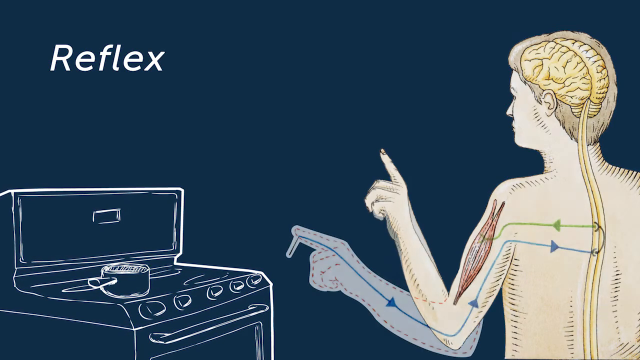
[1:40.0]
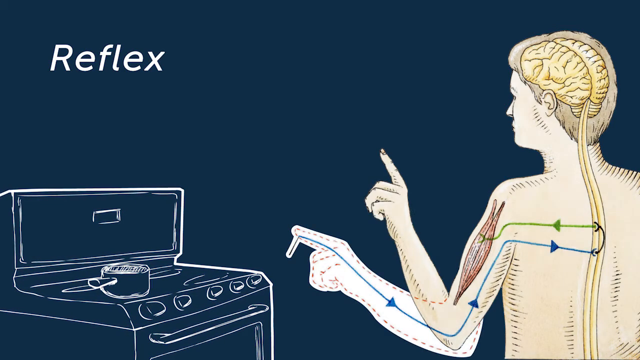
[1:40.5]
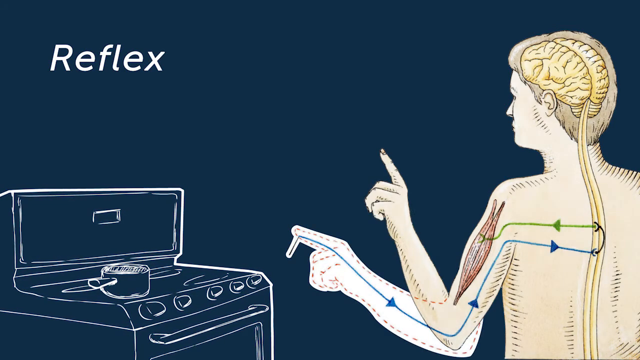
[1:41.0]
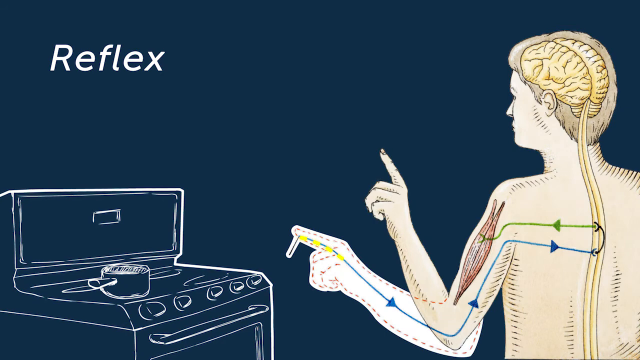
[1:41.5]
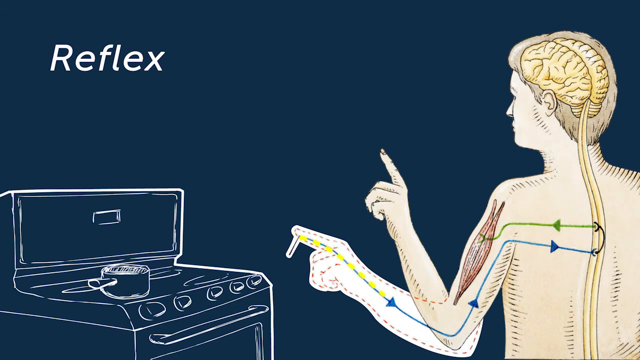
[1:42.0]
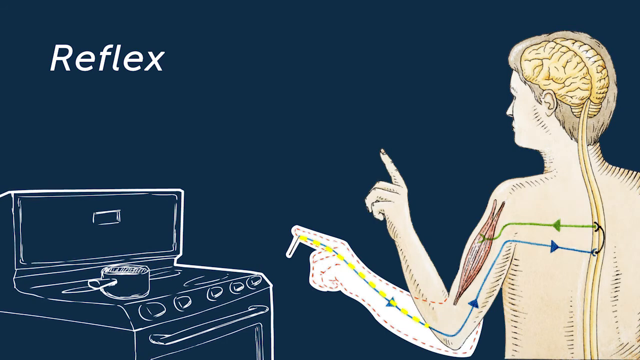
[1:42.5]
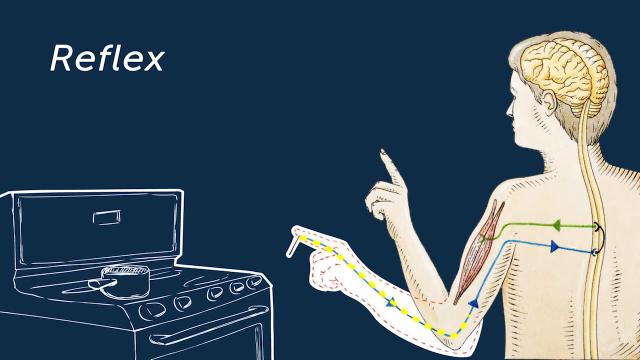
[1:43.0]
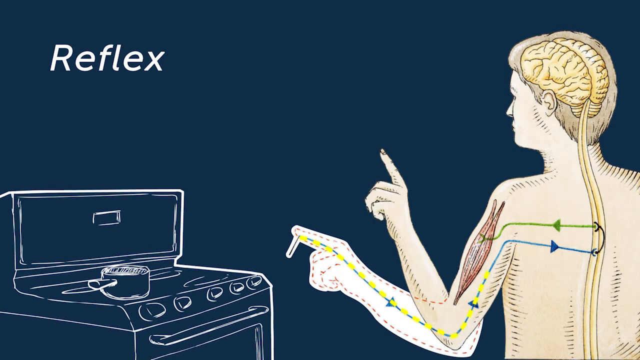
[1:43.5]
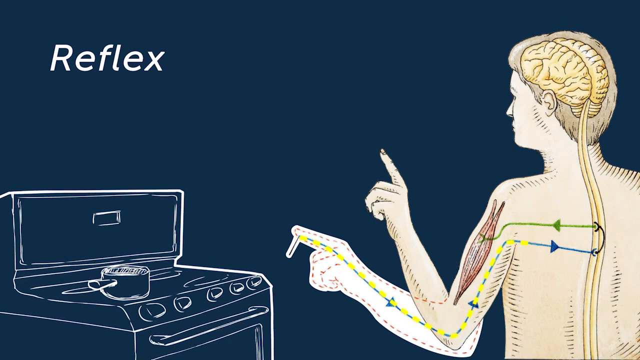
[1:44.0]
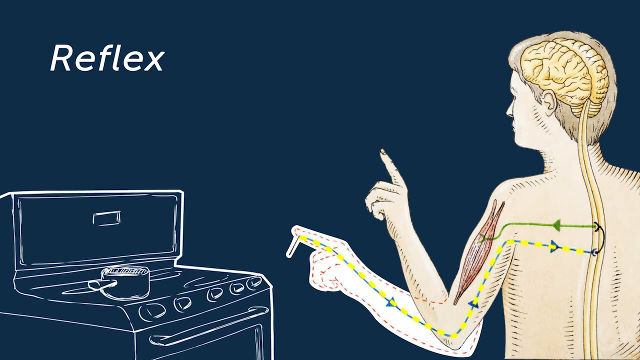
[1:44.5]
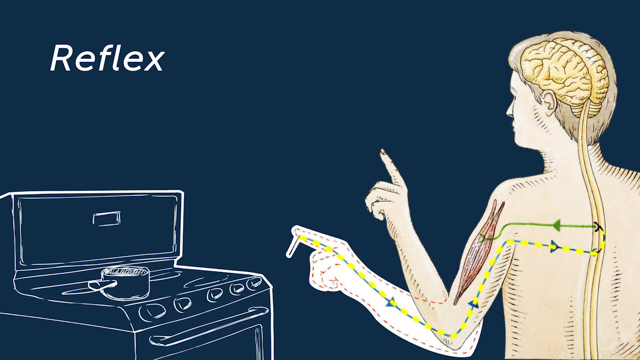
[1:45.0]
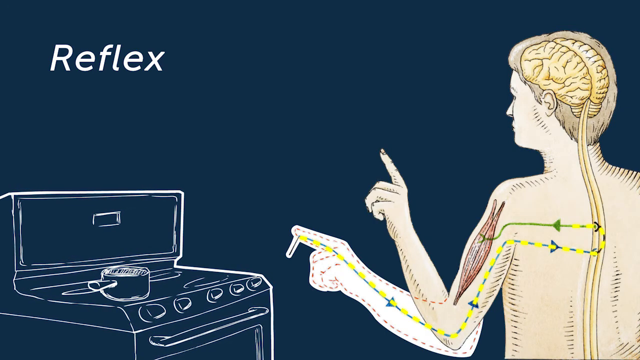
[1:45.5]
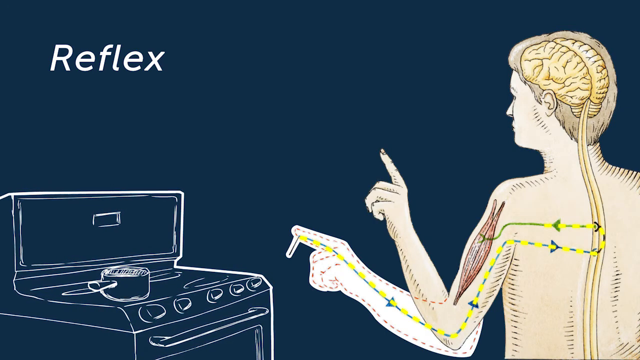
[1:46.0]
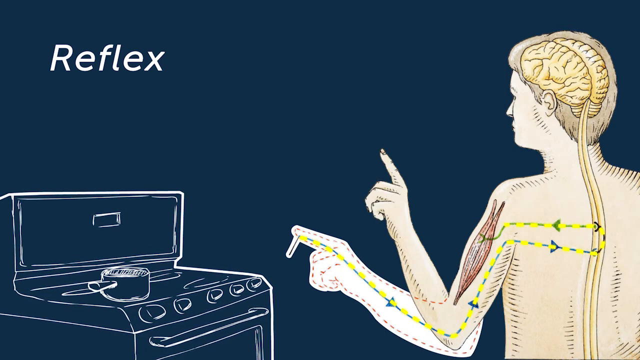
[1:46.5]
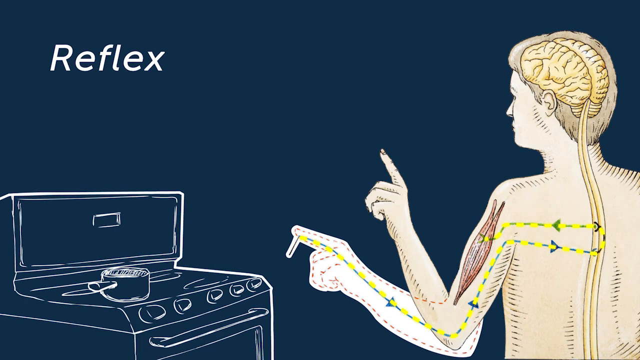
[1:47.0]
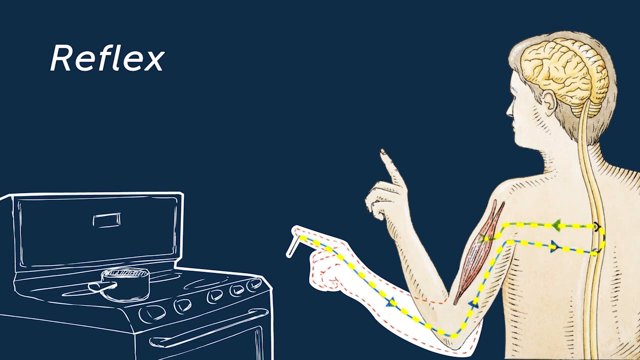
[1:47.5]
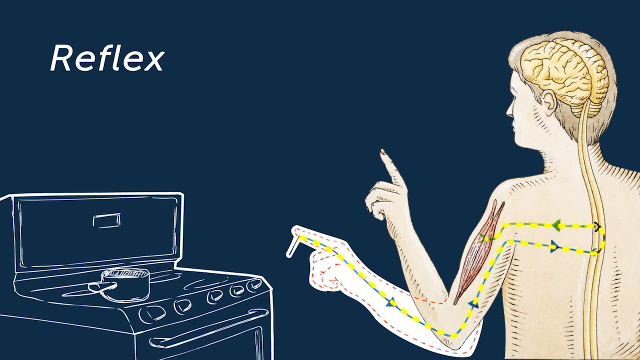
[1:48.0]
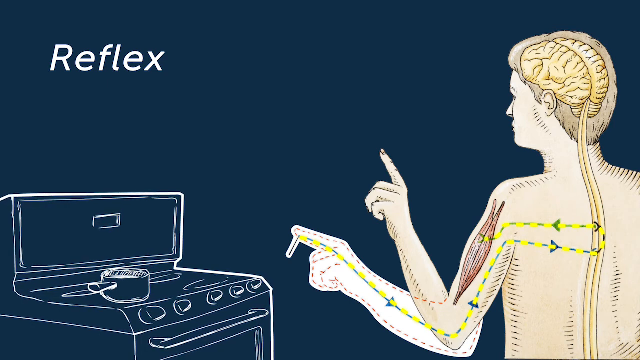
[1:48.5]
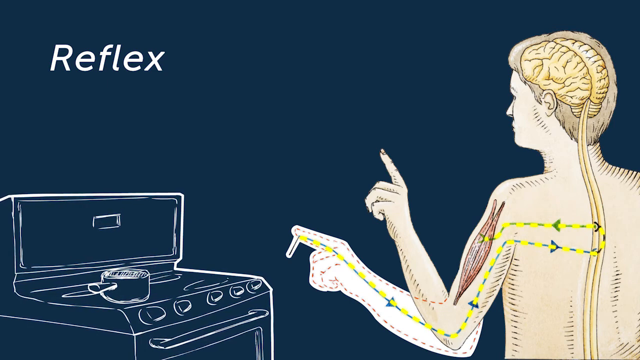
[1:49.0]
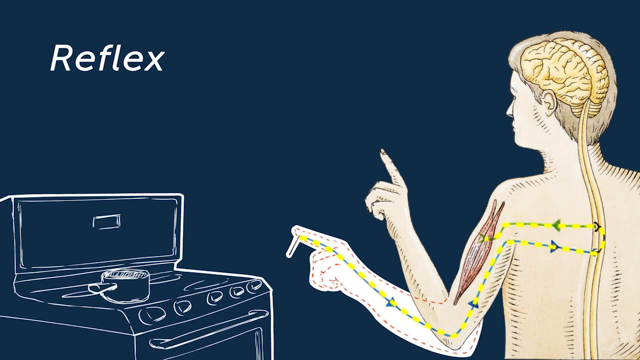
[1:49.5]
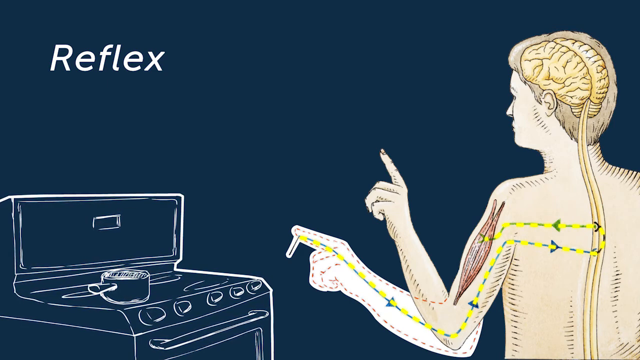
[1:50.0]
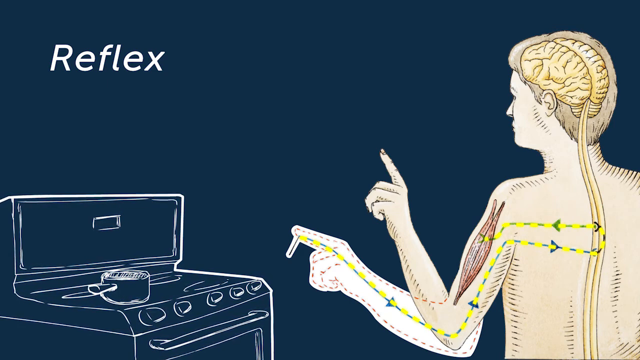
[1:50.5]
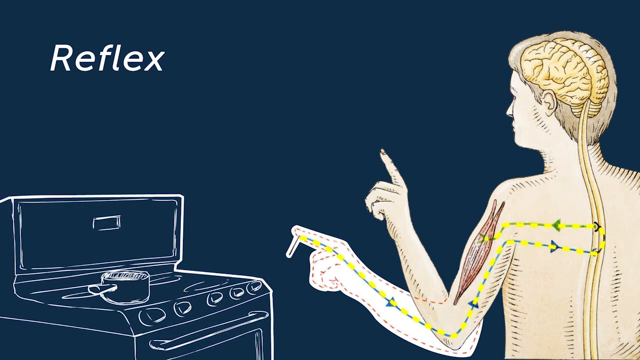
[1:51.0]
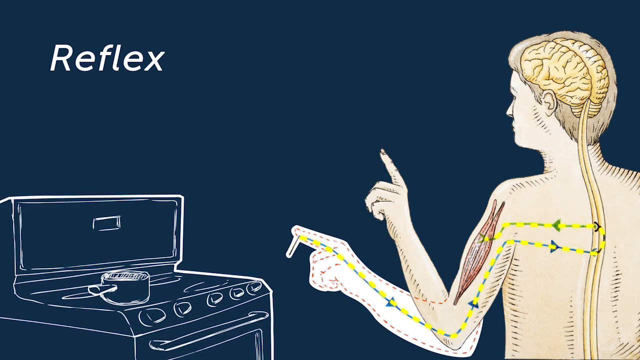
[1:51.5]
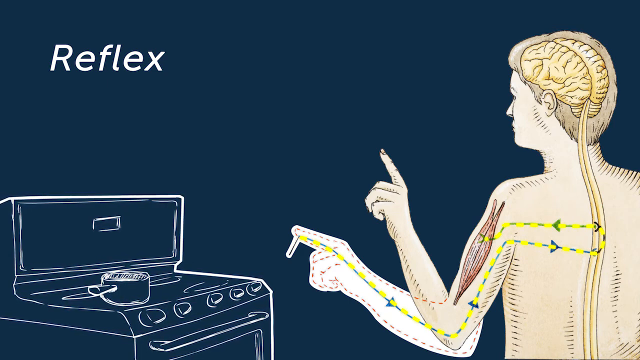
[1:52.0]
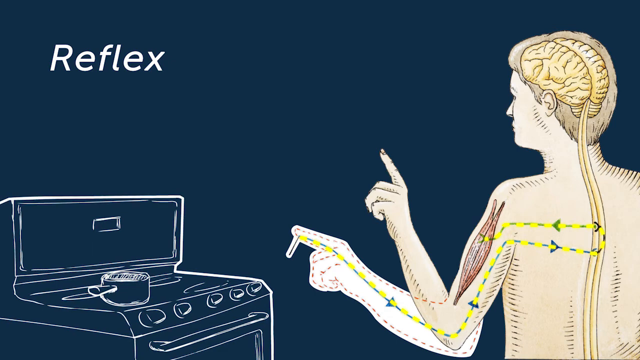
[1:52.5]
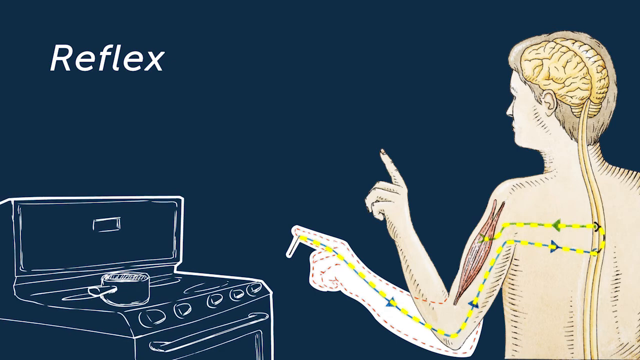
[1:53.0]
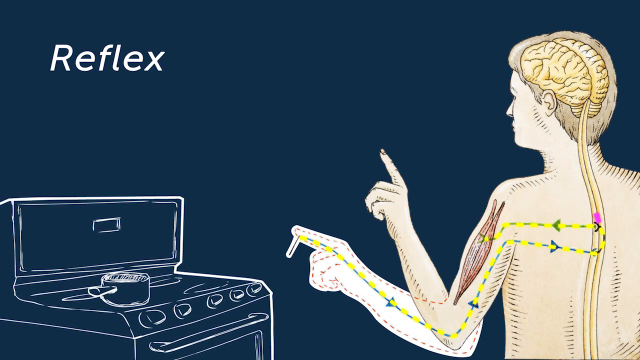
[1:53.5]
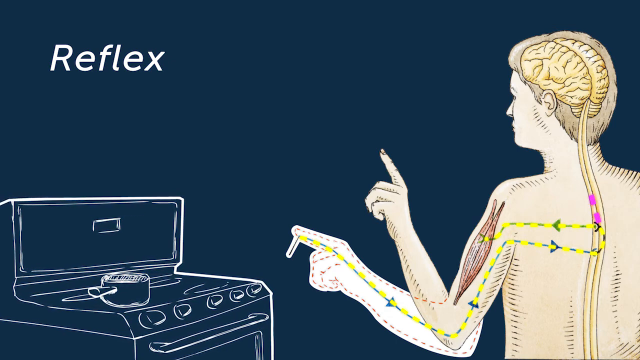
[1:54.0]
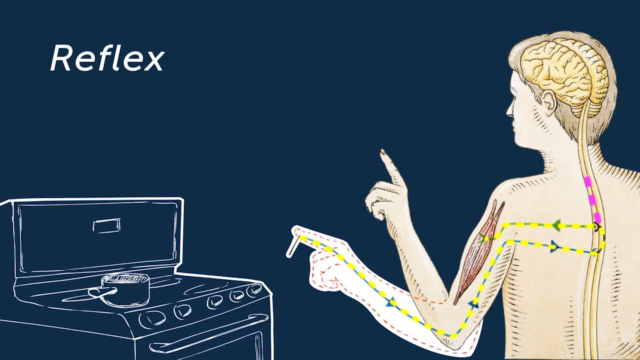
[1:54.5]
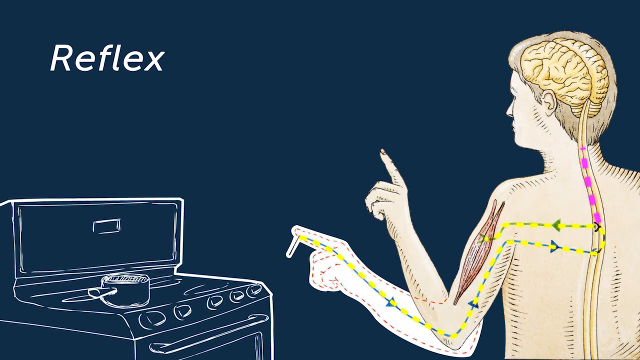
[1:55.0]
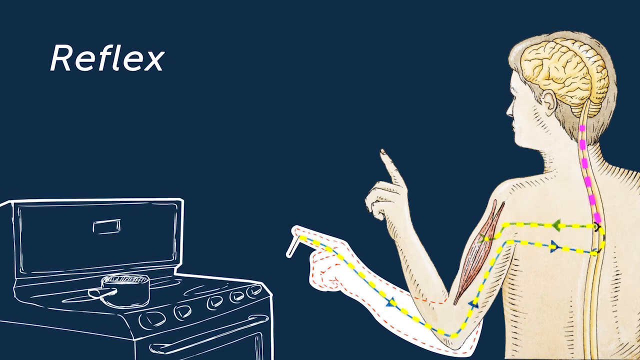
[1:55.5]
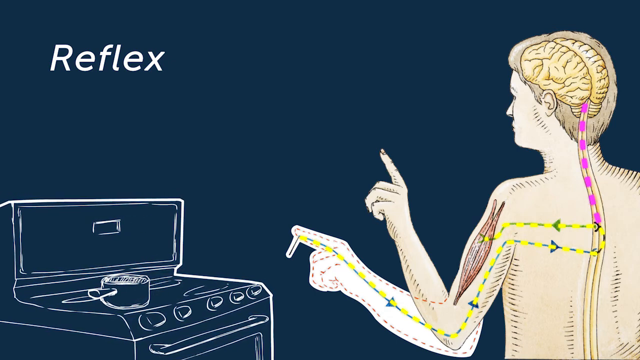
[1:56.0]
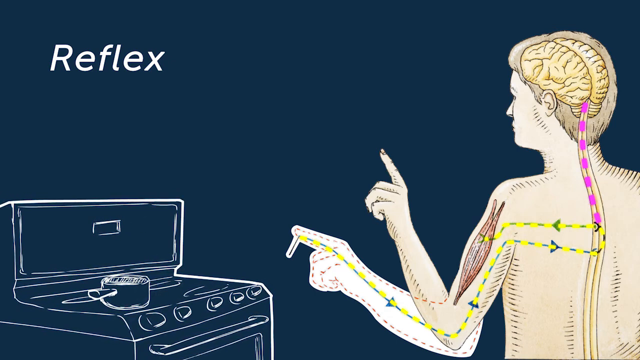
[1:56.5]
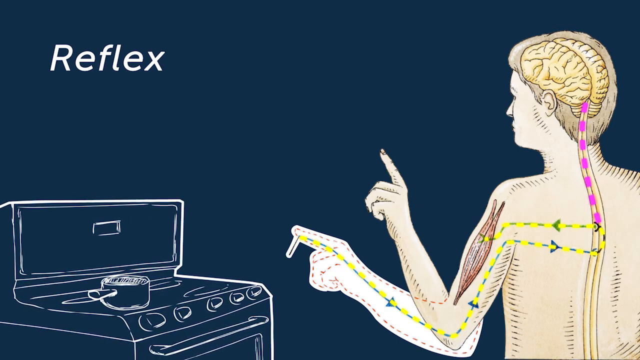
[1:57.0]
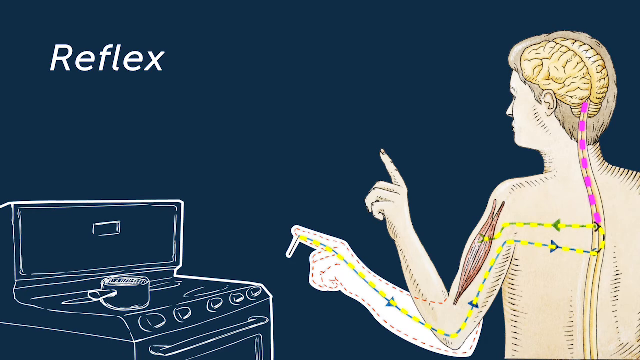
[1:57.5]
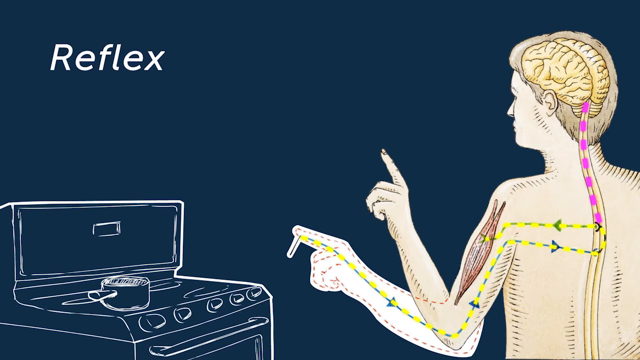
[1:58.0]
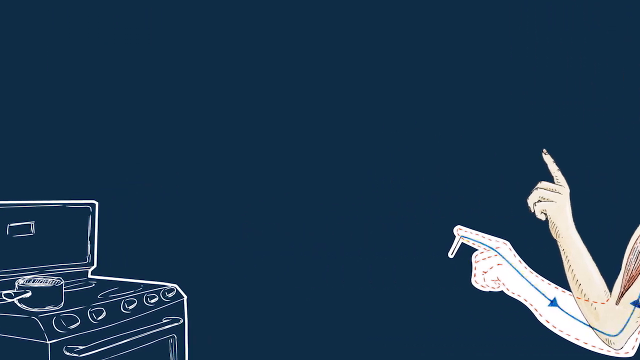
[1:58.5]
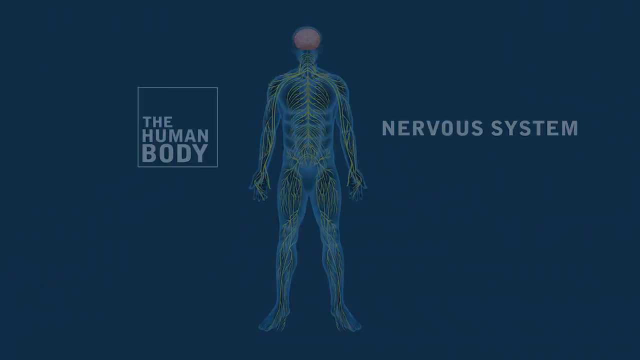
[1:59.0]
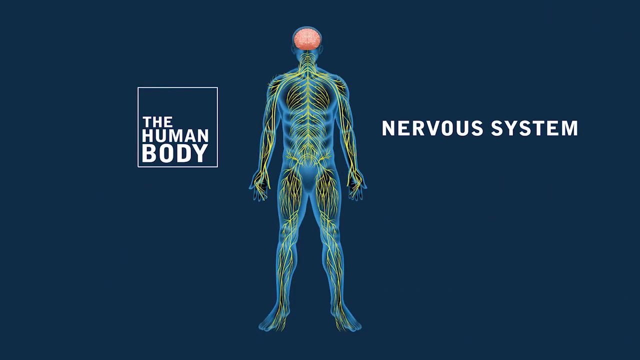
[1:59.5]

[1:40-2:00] When the hand comes back up into the V shape at the elbow, detail appears in the arm, with lines running from the finger all the way to the spinal cord. A blue line with arrows runs from the finger to the spinal cord, and a green line runs from the spinal cord to the arm muscle. Yellow dots travel through the blue line from the finger partway through the arm. A pink dotted line then appears from the middle of the spinal cord going up to the brain. A new screen appears with a blue background. On the left is a white-bordered box with white writing reading "the human body", and to the left there is writing in capital letters that says "the nervous system". In the centre is the skeleton figure with a pink brain visible.